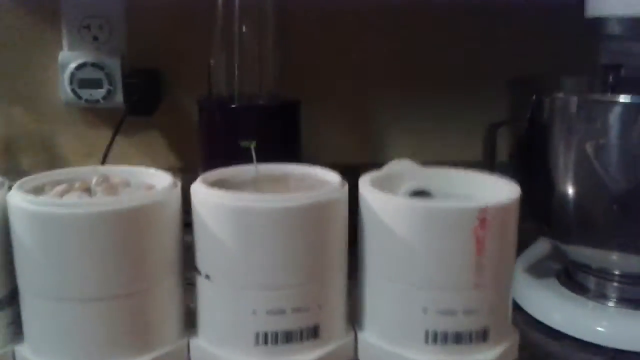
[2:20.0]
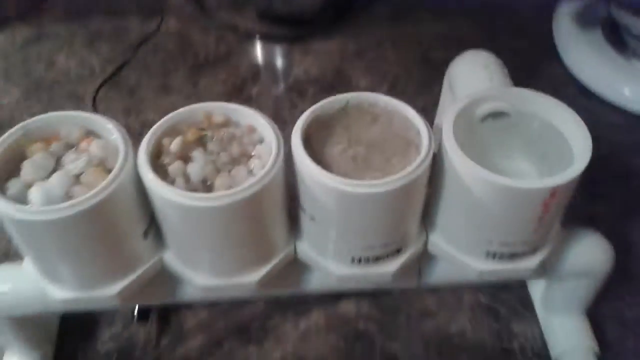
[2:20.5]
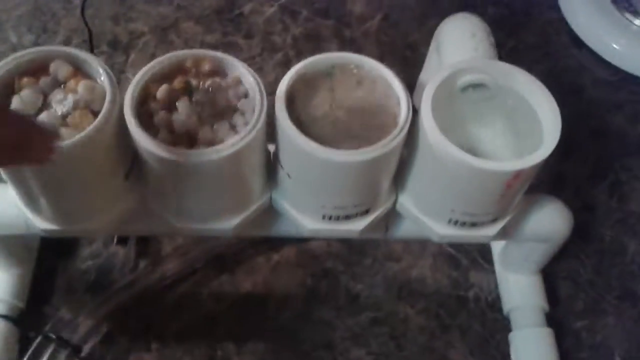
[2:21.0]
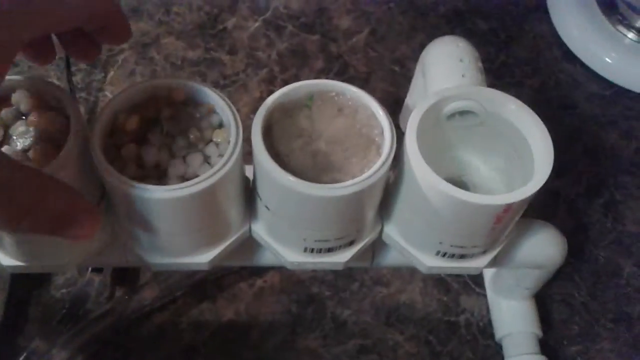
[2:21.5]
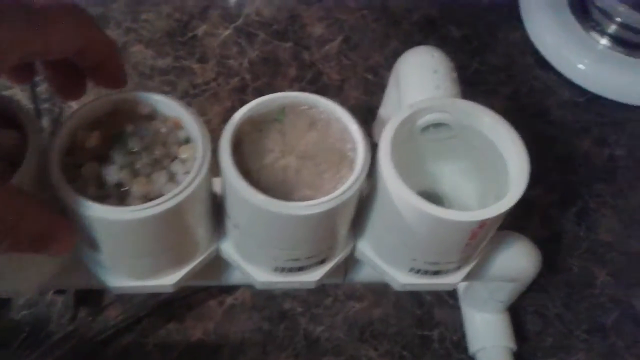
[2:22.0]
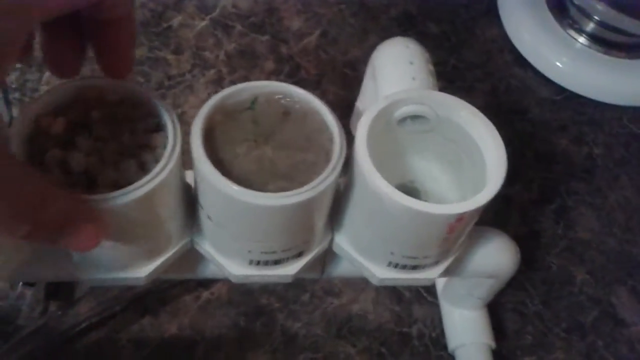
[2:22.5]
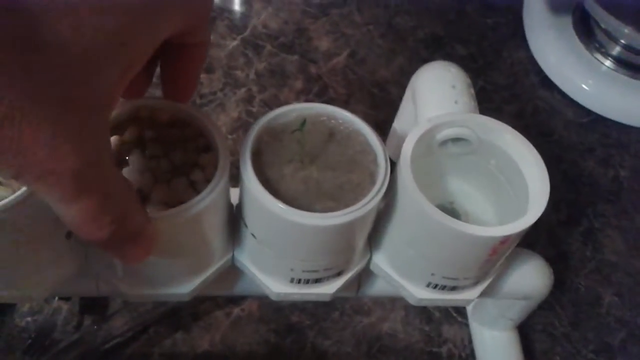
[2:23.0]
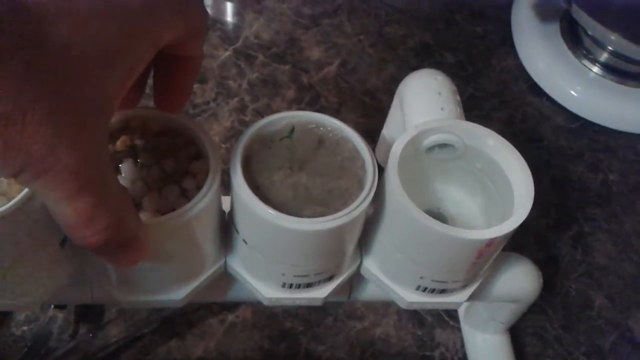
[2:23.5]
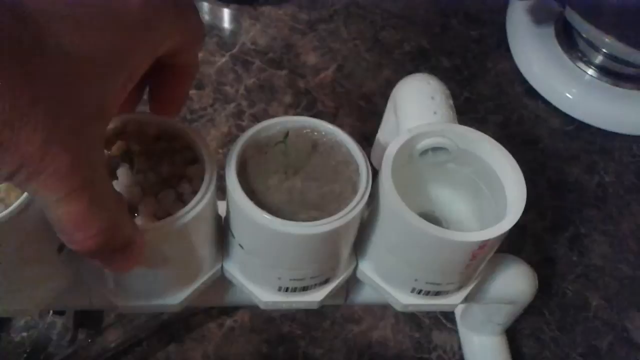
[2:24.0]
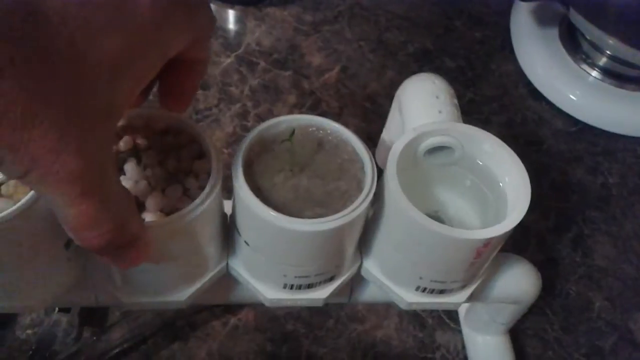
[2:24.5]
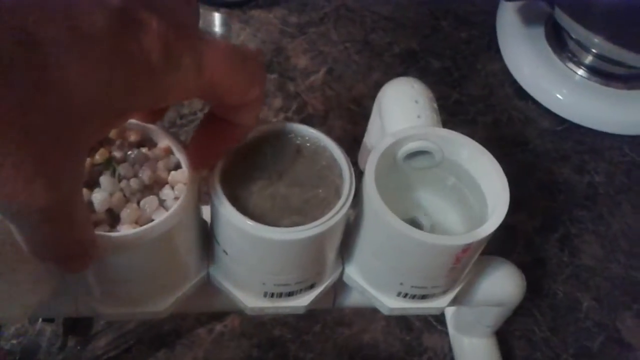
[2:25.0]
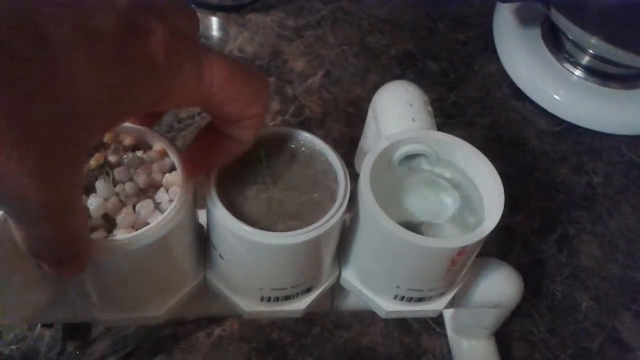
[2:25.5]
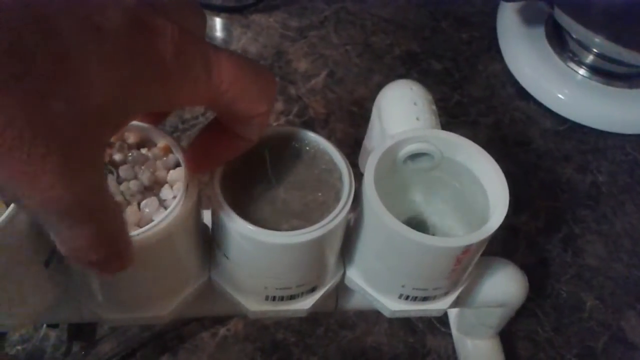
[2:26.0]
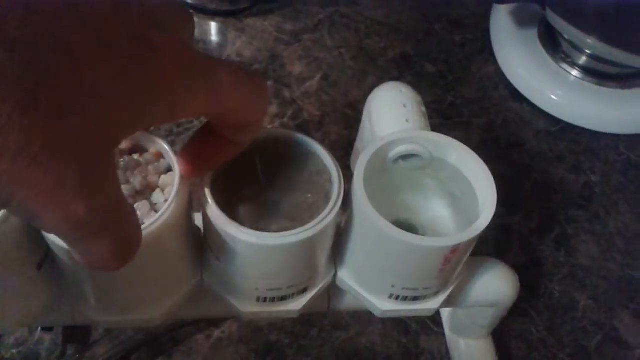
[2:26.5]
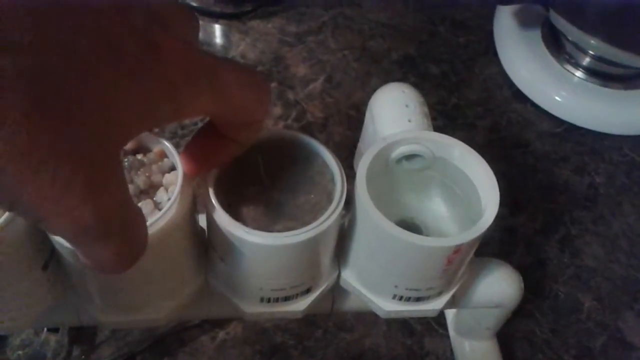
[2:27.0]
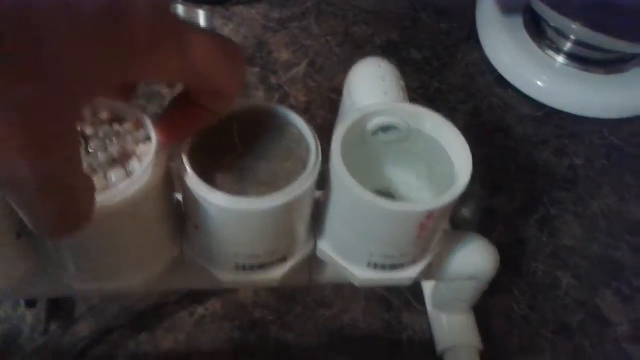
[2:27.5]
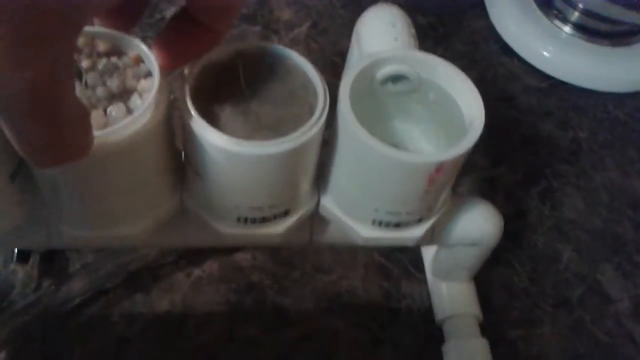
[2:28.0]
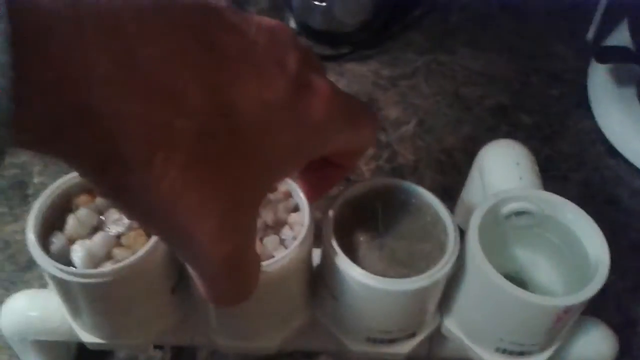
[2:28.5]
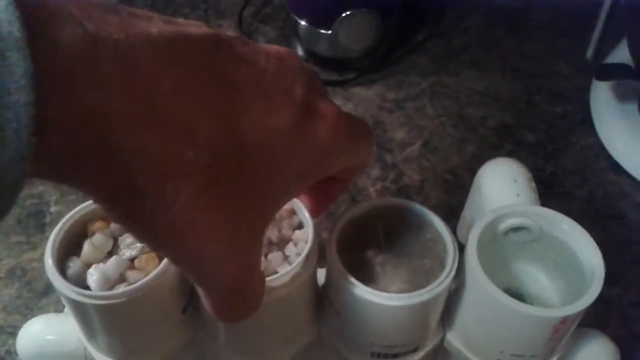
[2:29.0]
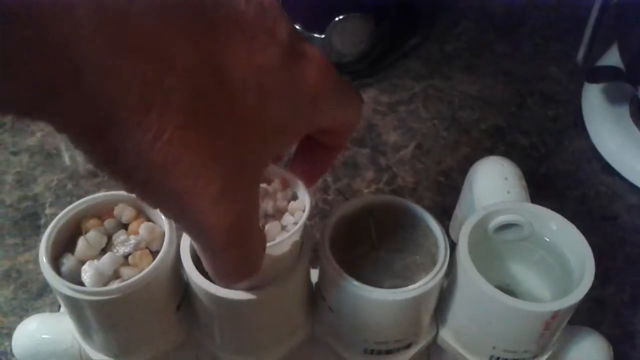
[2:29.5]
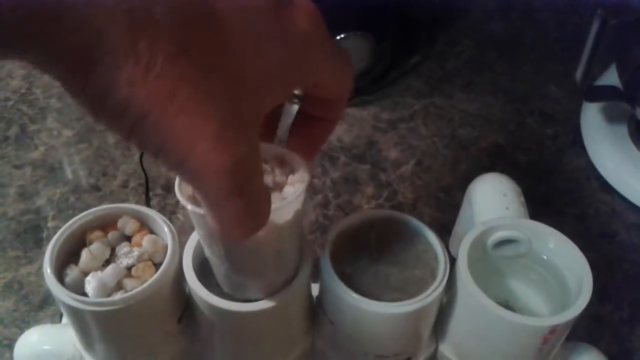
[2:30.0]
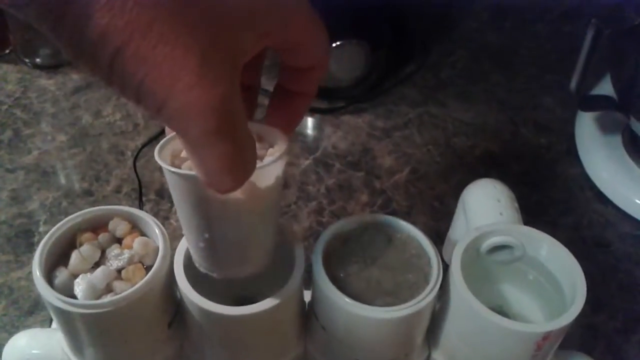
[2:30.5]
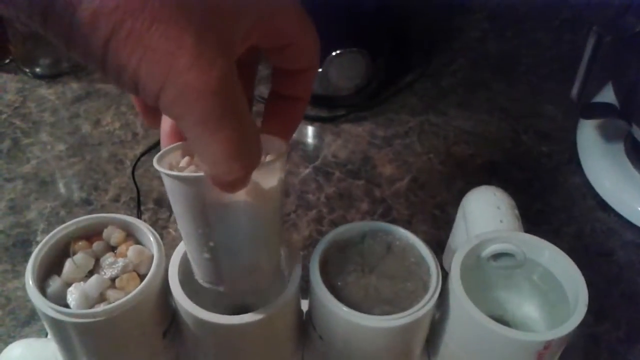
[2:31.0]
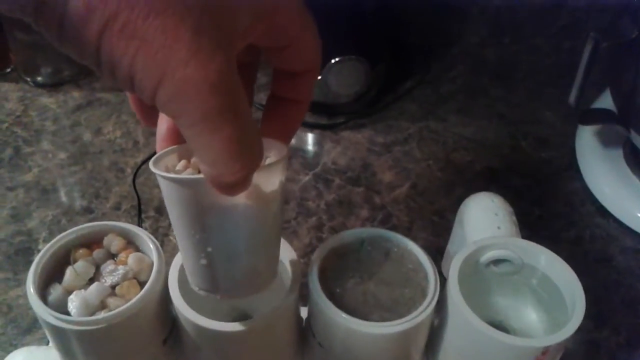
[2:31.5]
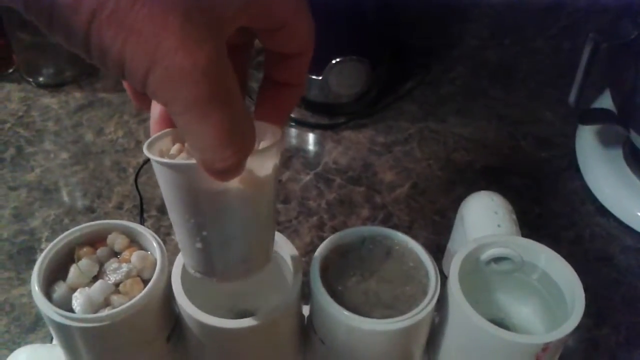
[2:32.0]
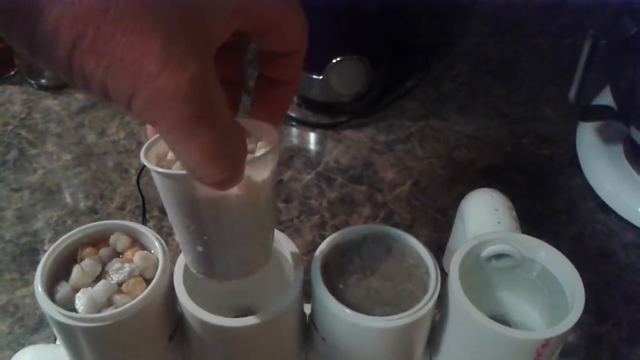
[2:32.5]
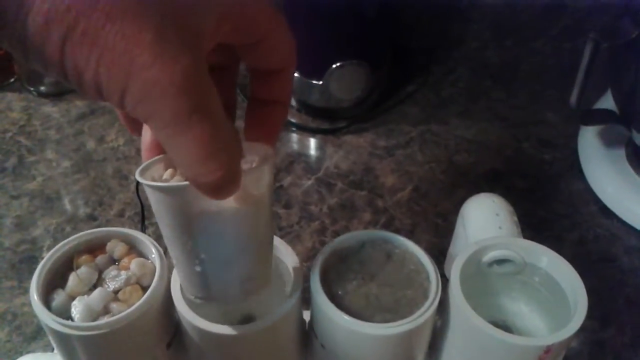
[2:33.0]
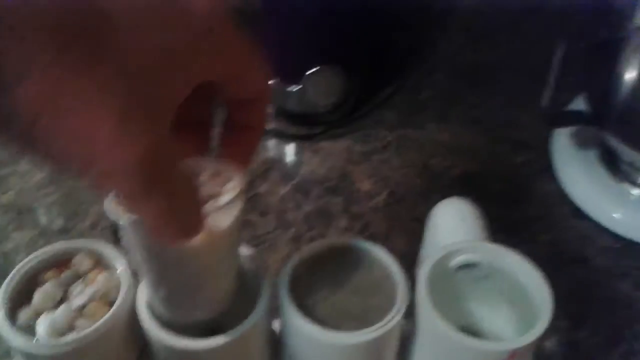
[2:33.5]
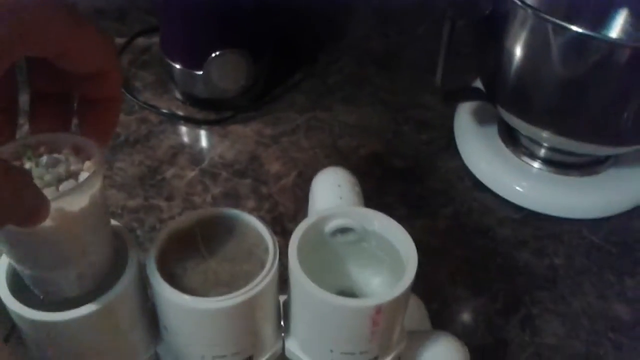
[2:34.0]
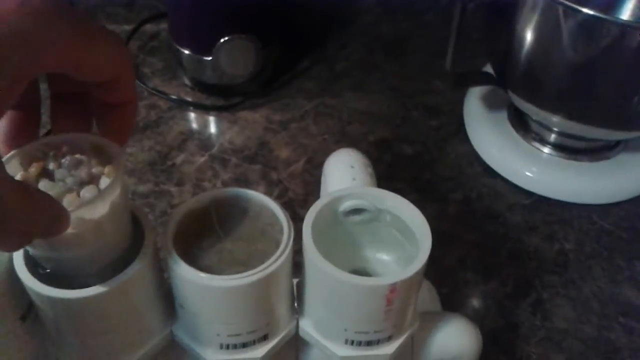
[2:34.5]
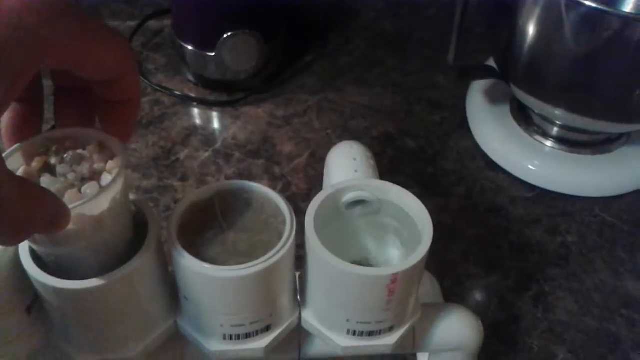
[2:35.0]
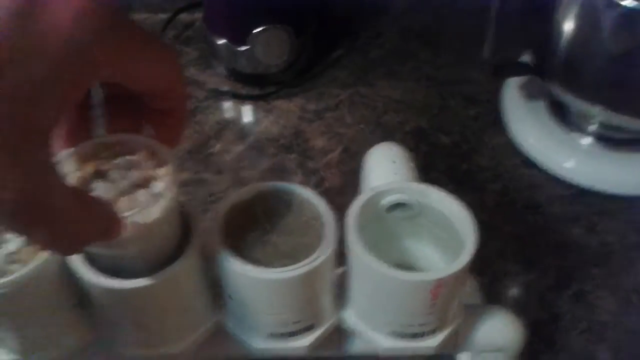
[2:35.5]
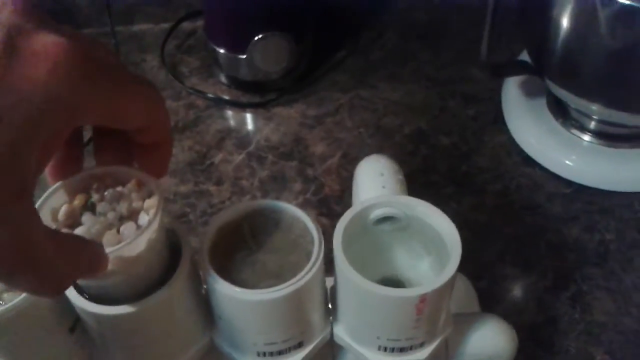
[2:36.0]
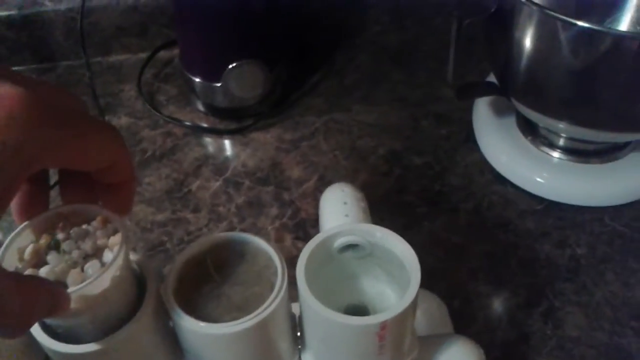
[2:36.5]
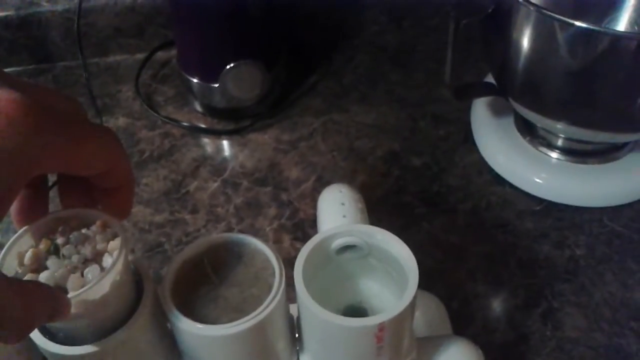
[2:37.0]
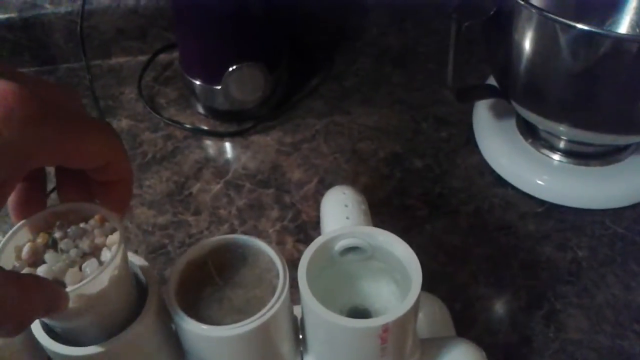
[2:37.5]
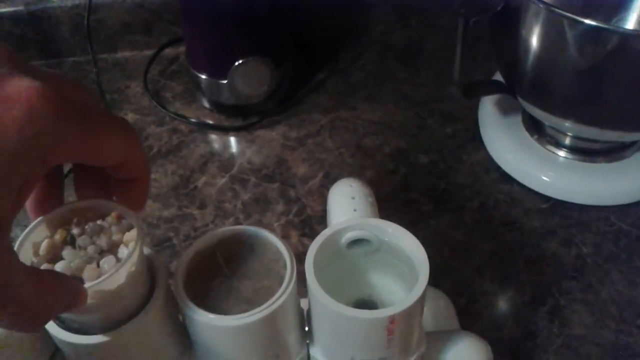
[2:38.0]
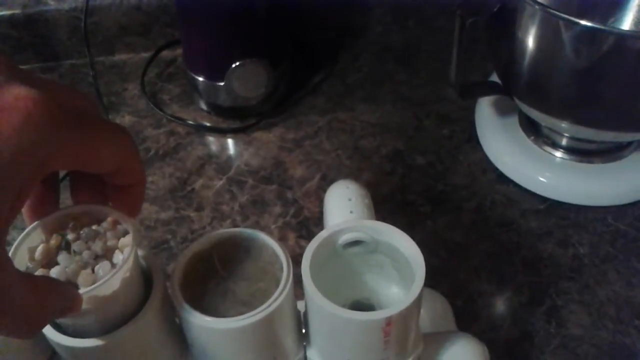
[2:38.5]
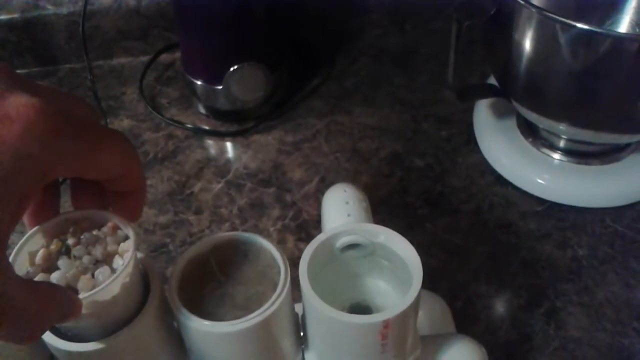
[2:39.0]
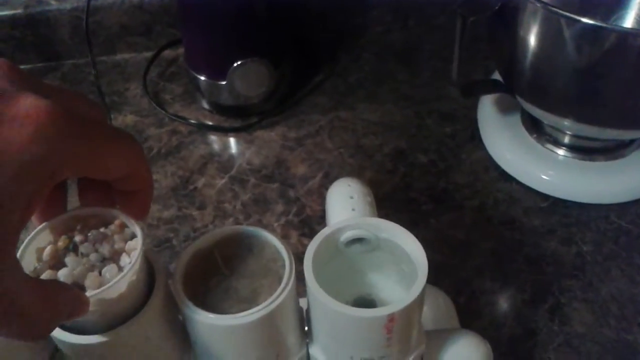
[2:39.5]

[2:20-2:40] The DIY how-to video, apparently about hydroponic gardening, shows three cylinders with graduated amounts of material such as rocks and sand. The fourth one, on the right, had nothing in it and is now filling with water as the guy runs a pump. He points to the middle one and removes a cup out of the water. The cup has rocks in it and a tiny stem growing out of it.